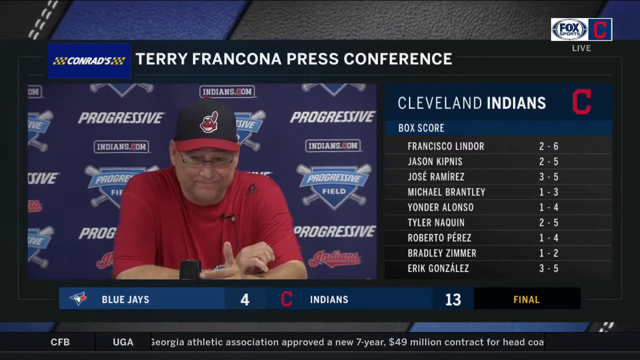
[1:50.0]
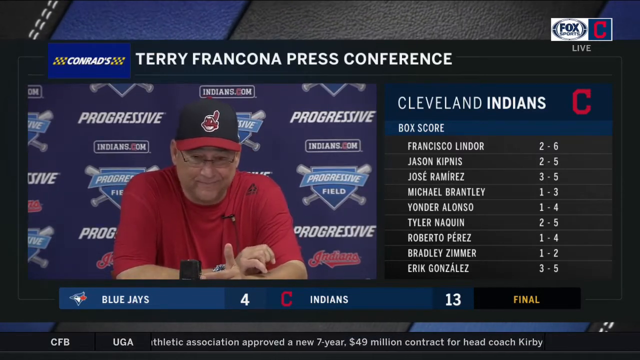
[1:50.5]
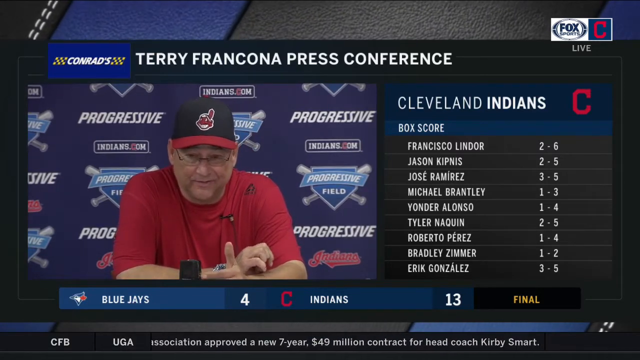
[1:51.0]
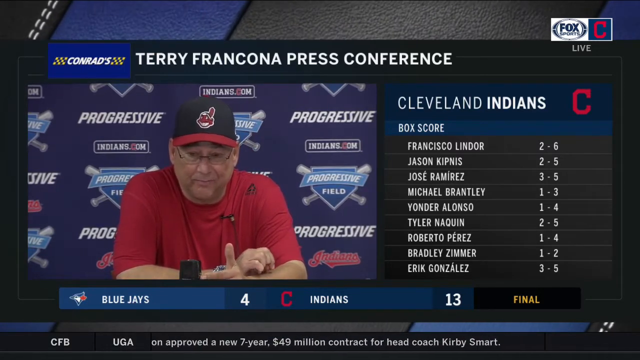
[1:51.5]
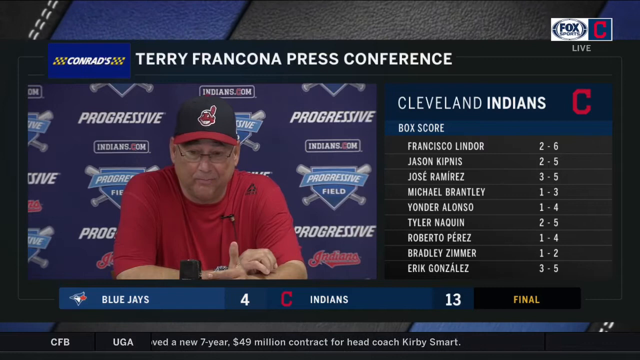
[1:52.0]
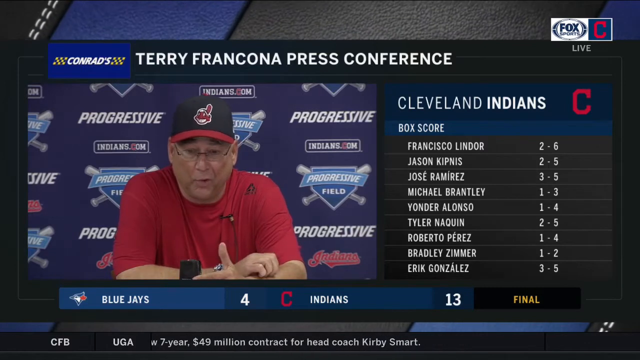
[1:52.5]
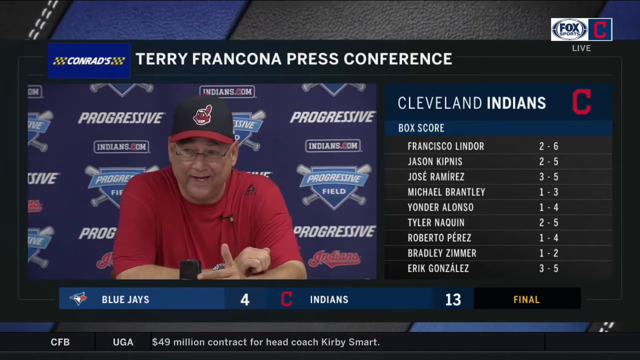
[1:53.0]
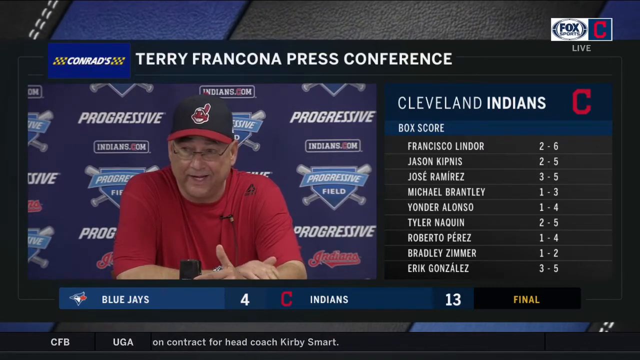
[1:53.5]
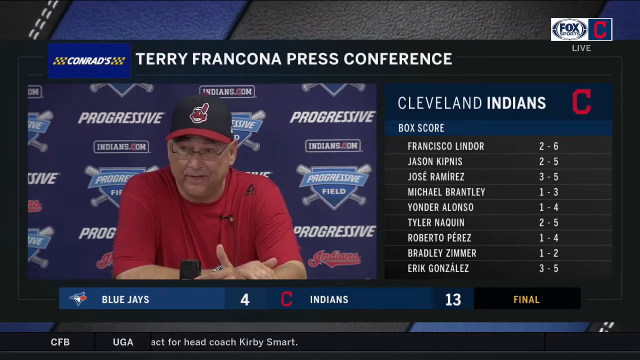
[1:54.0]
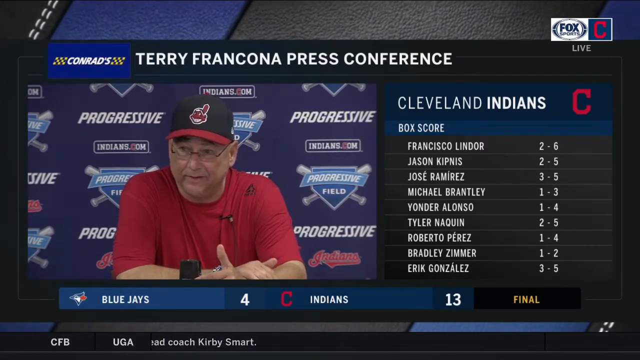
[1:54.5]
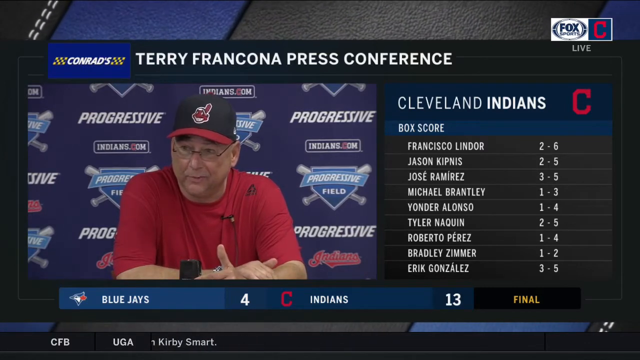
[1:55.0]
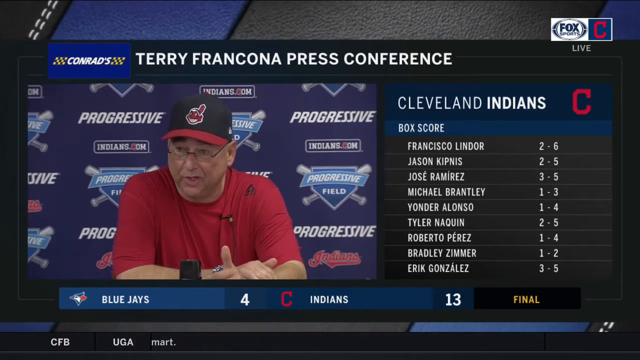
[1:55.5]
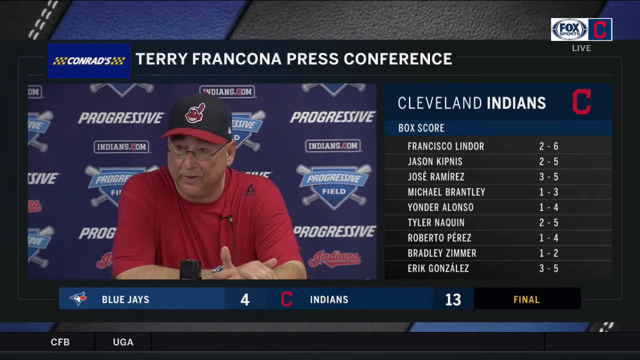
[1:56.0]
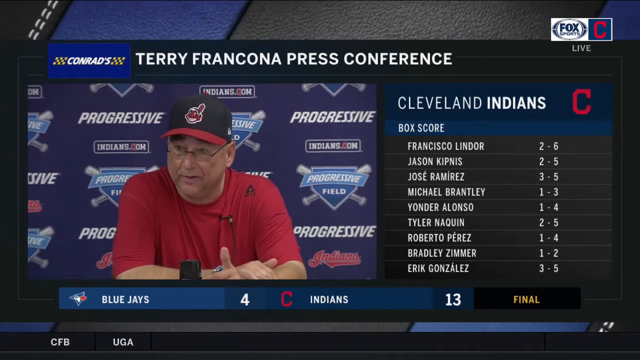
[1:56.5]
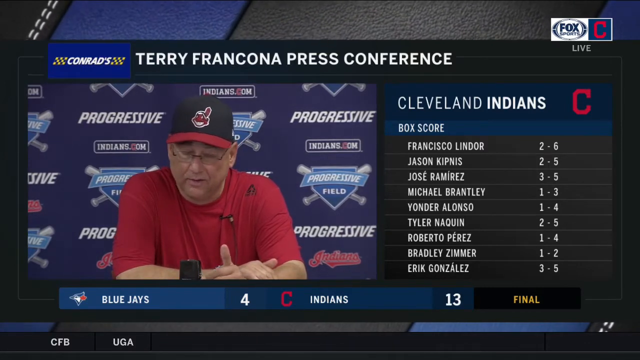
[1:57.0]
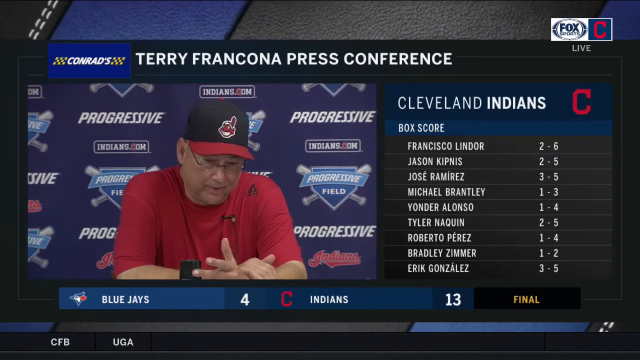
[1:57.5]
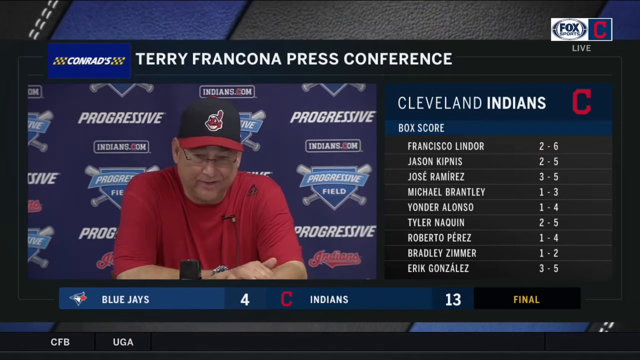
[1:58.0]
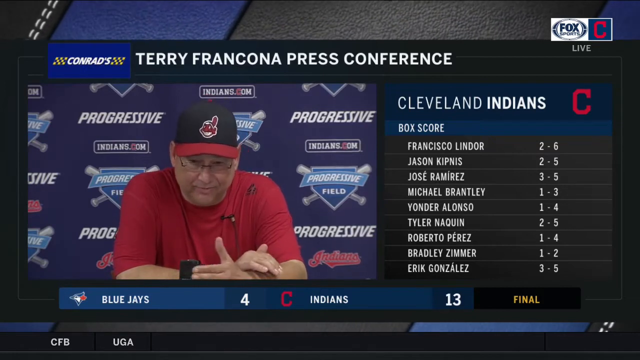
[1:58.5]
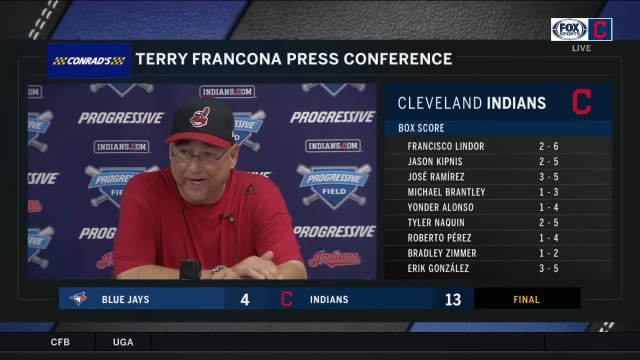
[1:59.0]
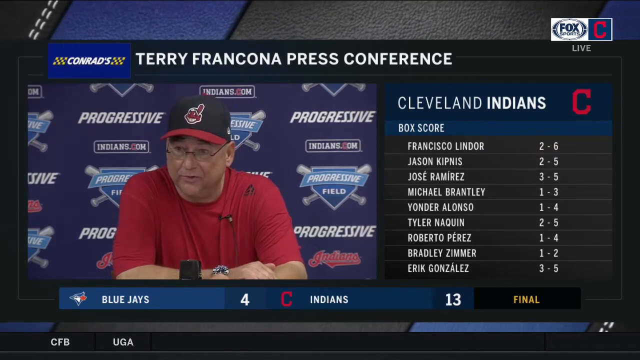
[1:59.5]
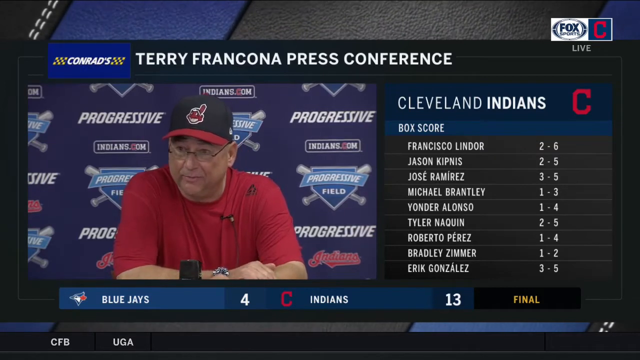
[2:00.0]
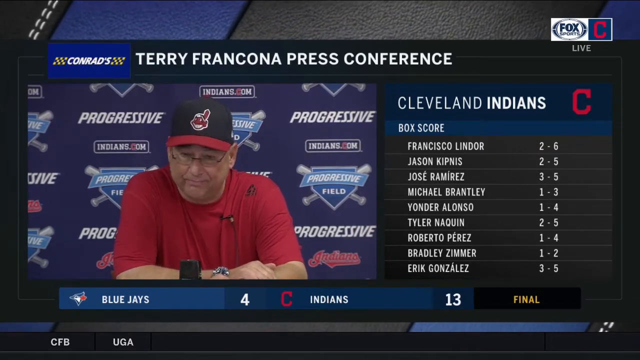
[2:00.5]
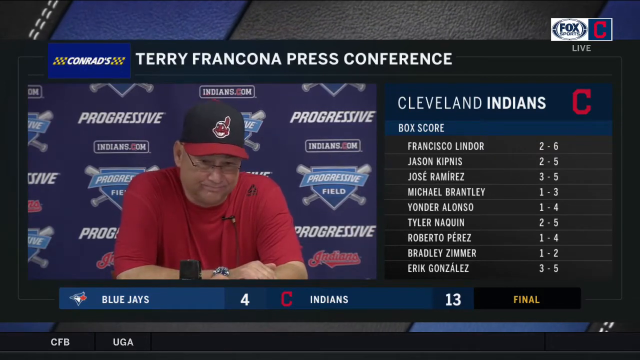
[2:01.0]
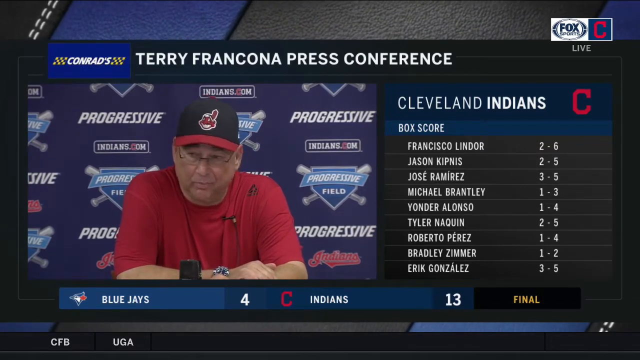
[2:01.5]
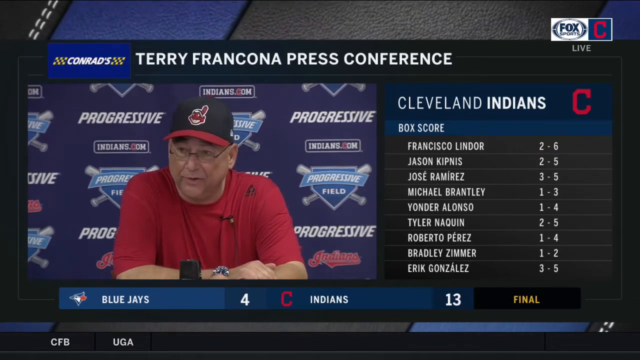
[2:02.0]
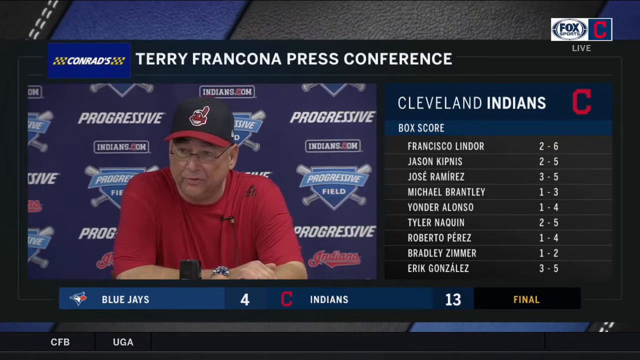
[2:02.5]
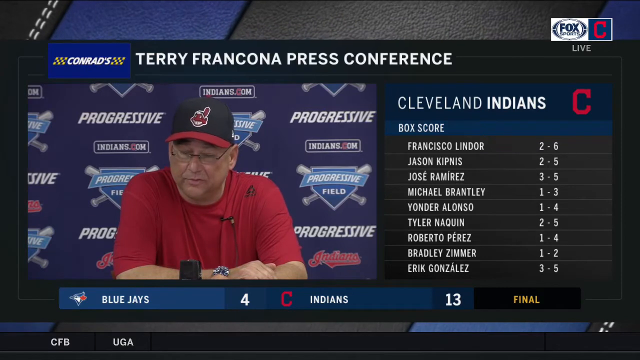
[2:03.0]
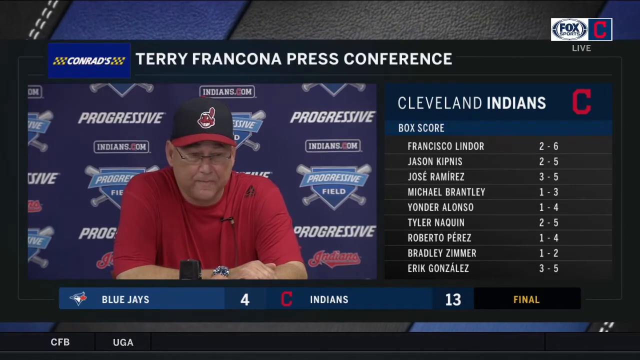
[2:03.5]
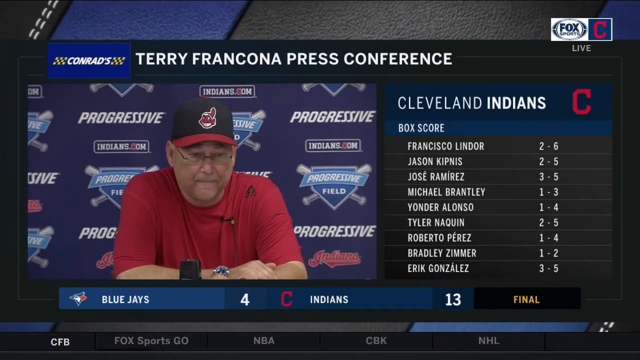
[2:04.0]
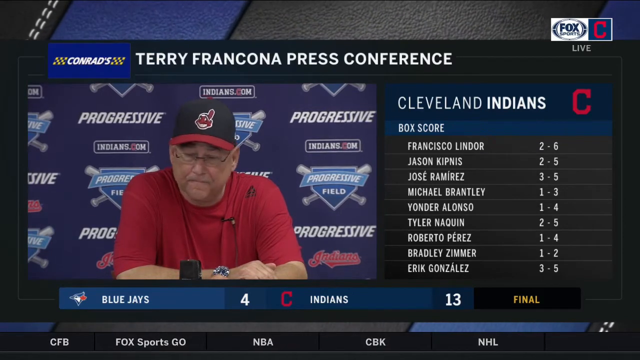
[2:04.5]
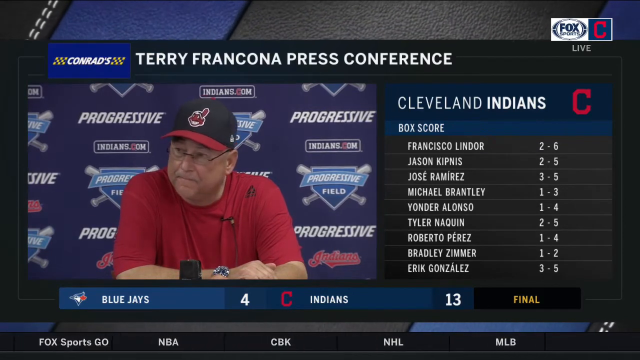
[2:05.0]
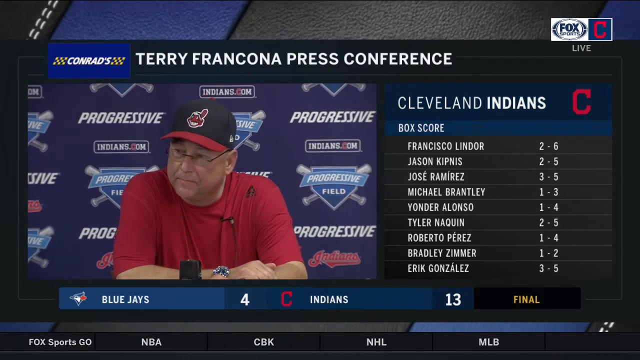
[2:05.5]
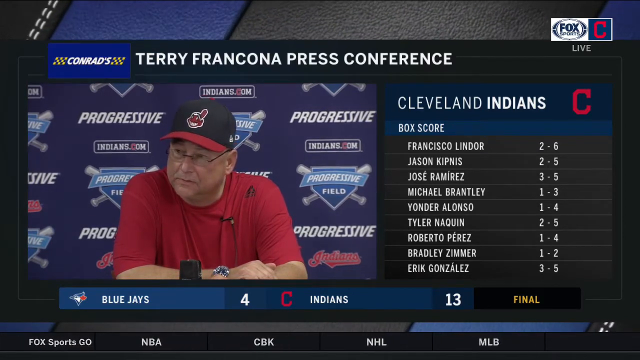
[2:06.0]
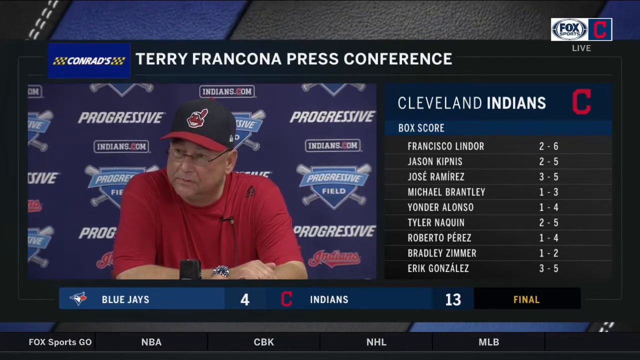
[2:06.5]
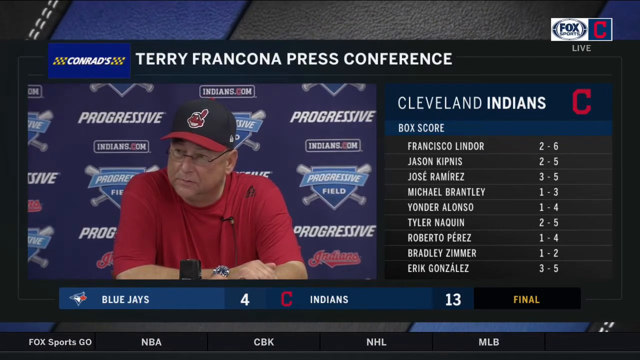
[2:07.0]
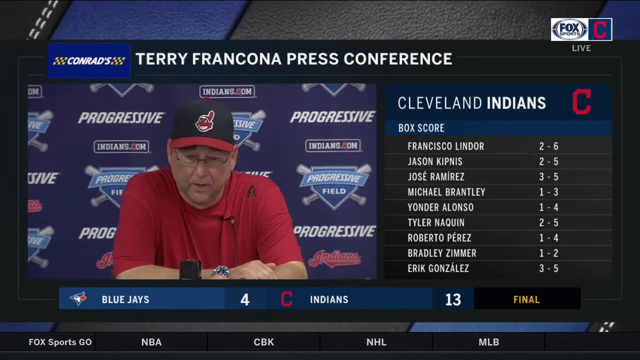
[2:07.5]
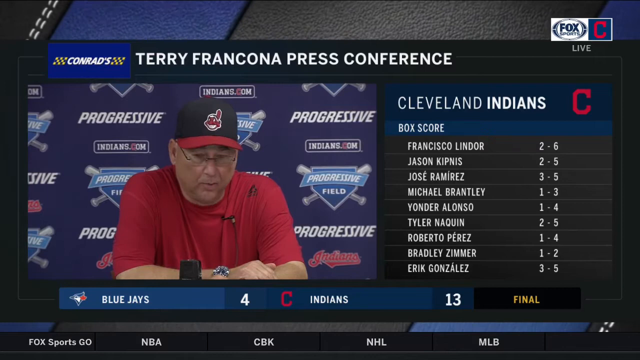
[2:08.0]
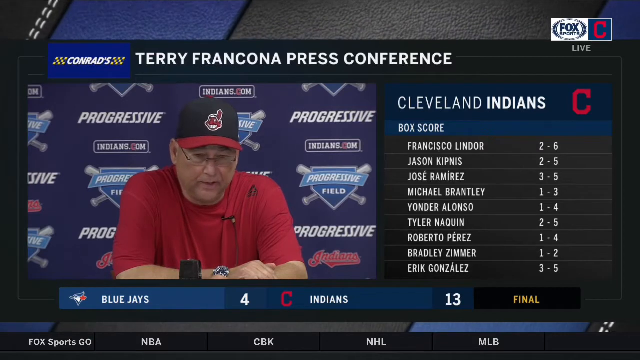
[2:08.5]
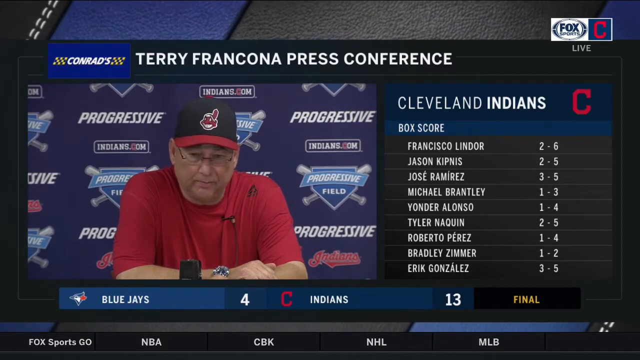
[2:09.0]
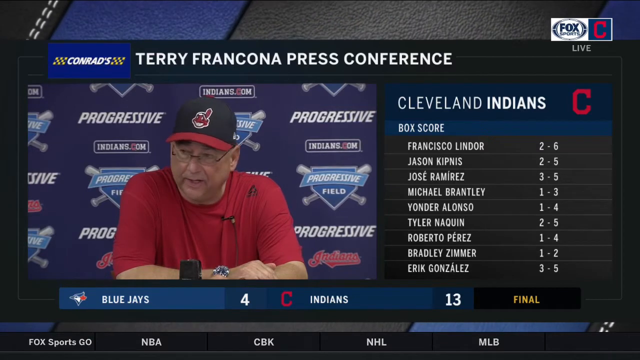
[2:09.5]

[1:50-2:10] The title remains the Francona press conference, and the Fox Sports logo is in the upper right-hand corner. On the right side it says "Cleveland Indians" and "box score," with names such as Jose Ramirez and numbers next to them, like "3-5." Words move across the bottom of the screen, apparently quick information, reading "Fox Sports Go" and "NBA CBK NHL MLB." Above that part is "Blue Jays 4 Indians 15" with the word "final" in yellow. The man, apparently Terry Francona, talks, looks down at the microphone and turns toward the left side of the video, which is actually his right.